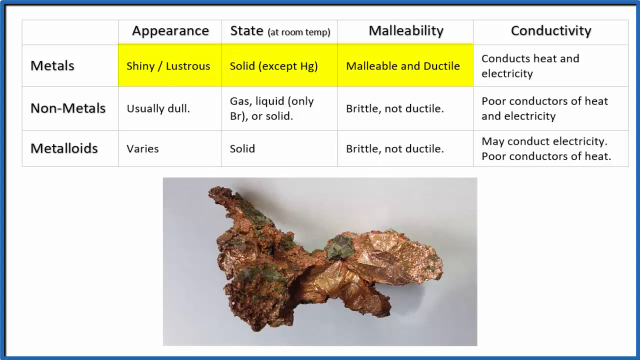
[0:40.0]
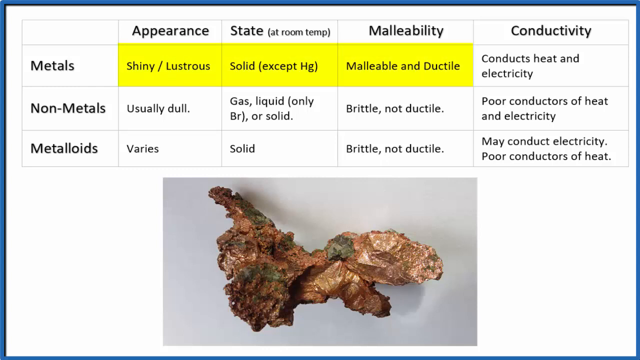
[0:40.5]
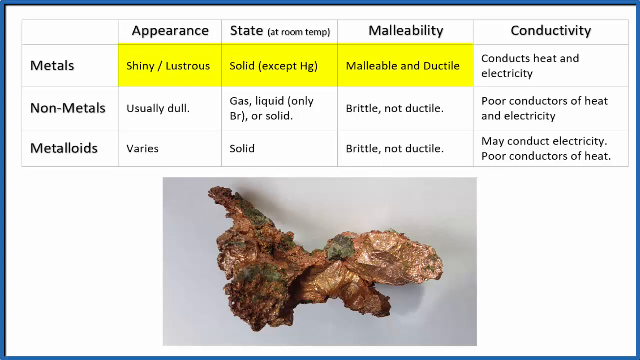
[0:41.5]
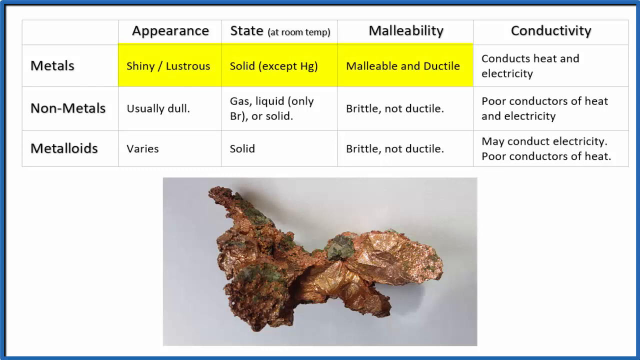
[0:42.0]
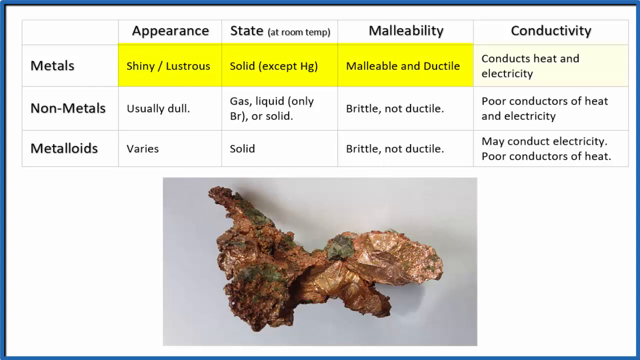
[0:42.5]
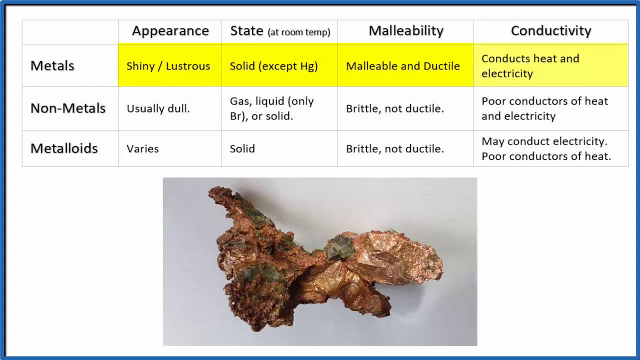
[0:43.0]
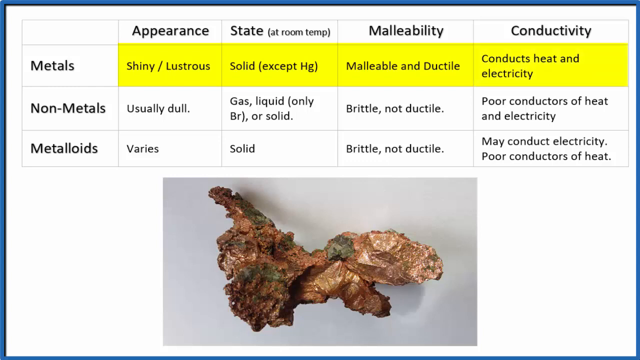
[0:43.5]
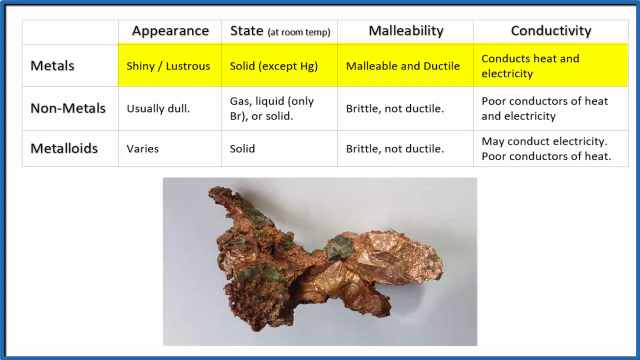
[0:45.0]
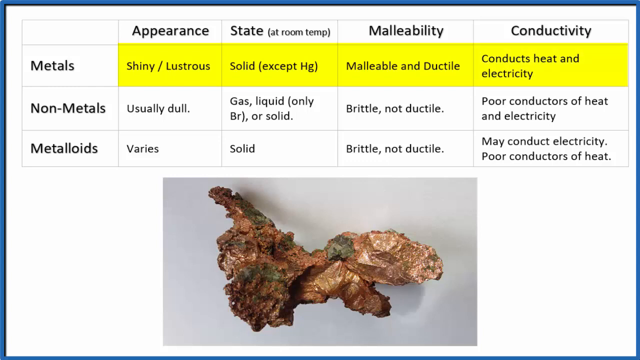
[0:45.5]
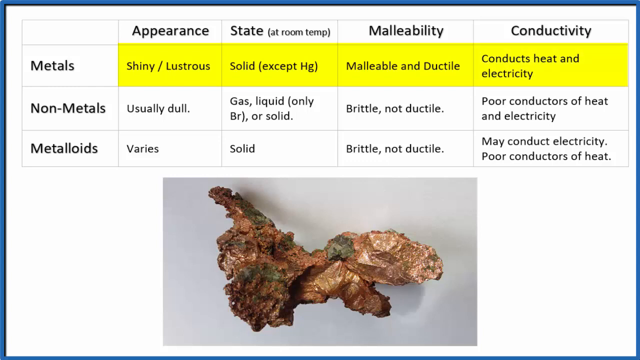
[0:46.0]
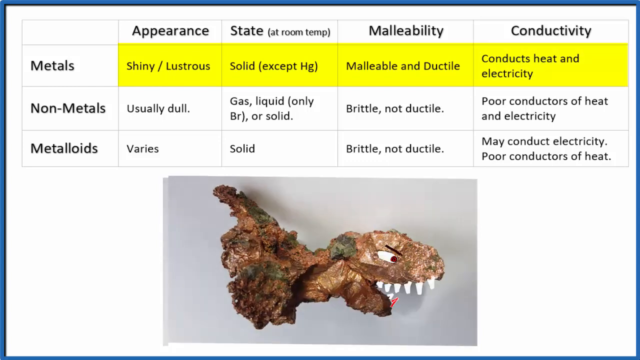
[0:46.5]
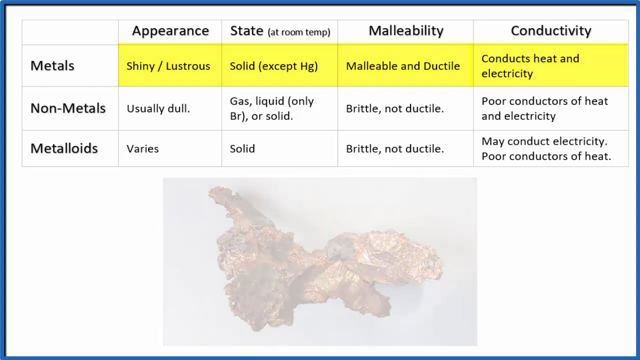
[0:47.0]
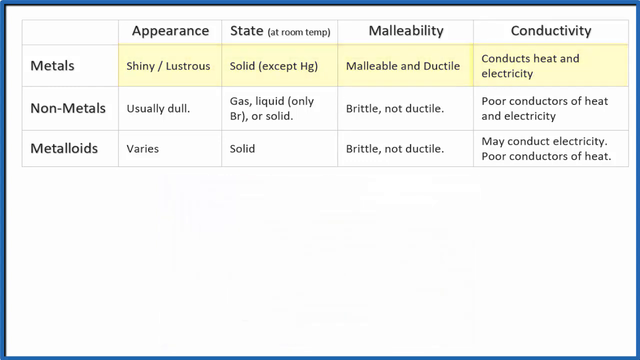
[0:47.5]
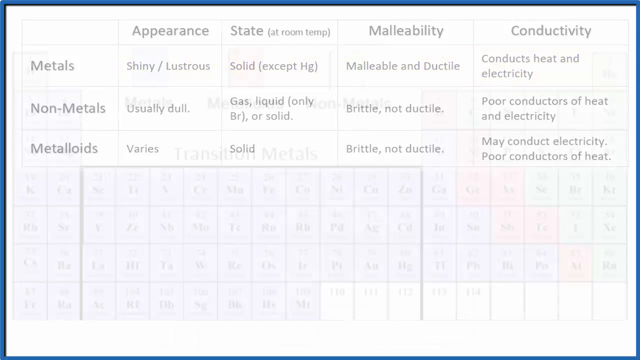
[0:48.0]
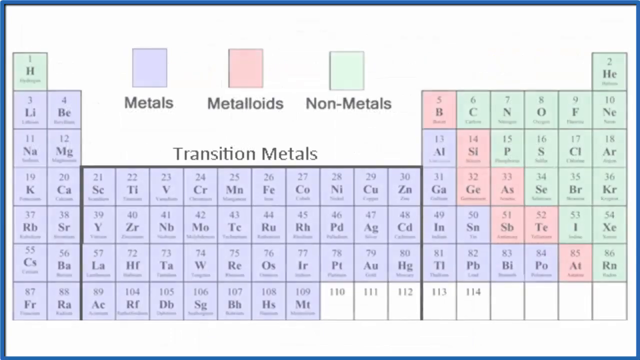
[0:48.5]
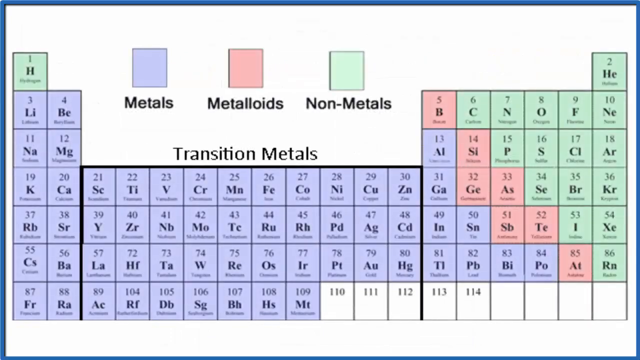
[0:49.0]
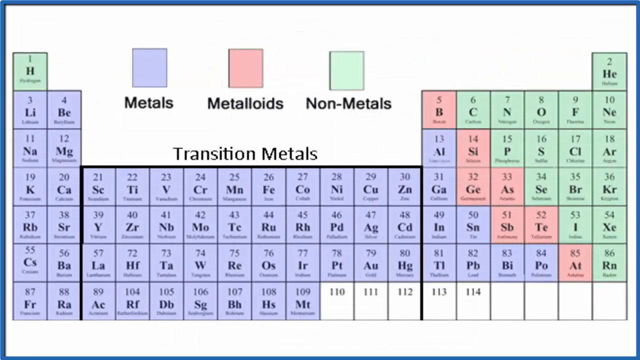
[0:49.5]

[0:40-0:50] A chart is on the page, and at the very bottom there is a picture of a piece of copper kind of shaped a little like a dinosaur, like a T-Rex. The first row of the chart is for metals, which is what copper is, the second row for non-metals and the third for metalloids. Across the top, the columns are appearance, state, malleability and conductivity, and the state column notes that it is for room temperature. The metals row is lit up in yellow: shiny and lustrous, solid, malleable and ductile, and conducts heat and electricity. Non-metals are usually dull; gas, liquid or solid; brittle but not ductile; and poor conductors of heat and electricity. For metalloids, appearance varies; they are solid; brittle, not ductile; and may conduct electricity but are poor conductors of heat.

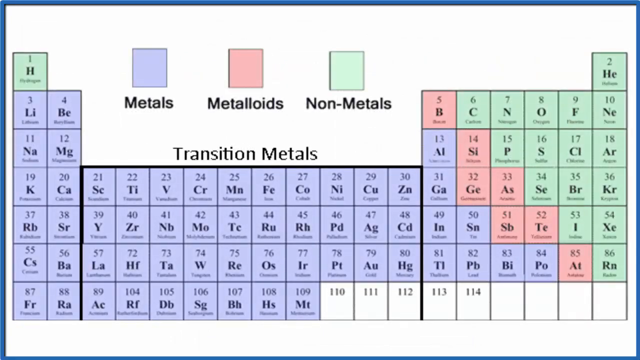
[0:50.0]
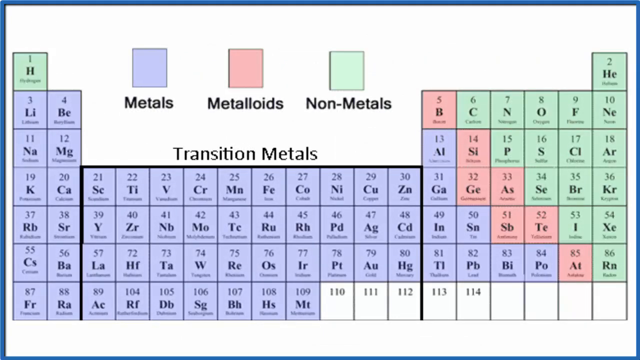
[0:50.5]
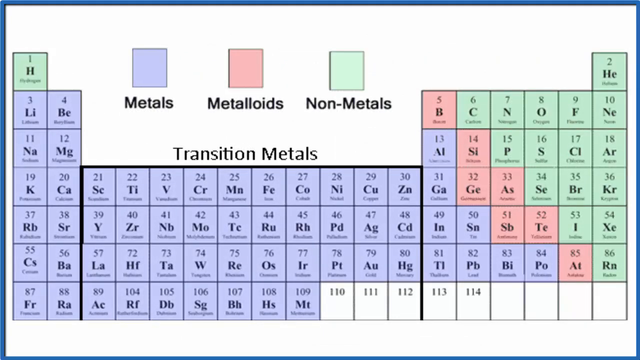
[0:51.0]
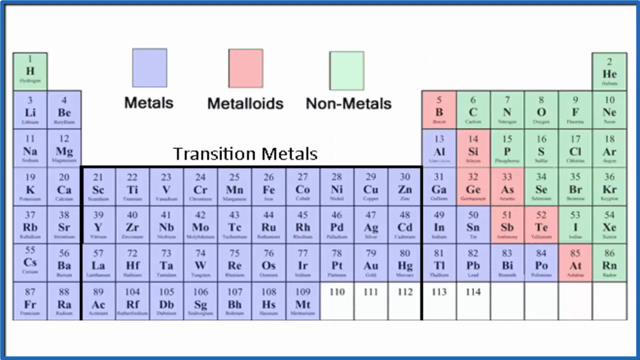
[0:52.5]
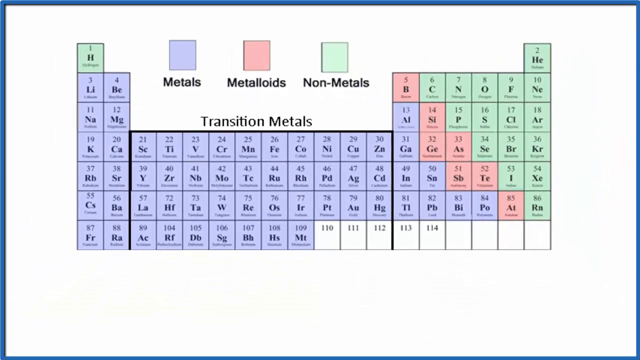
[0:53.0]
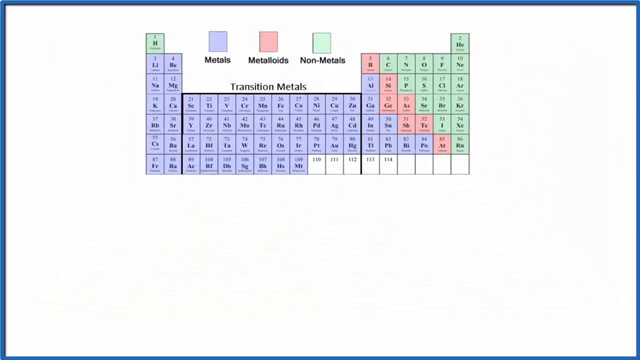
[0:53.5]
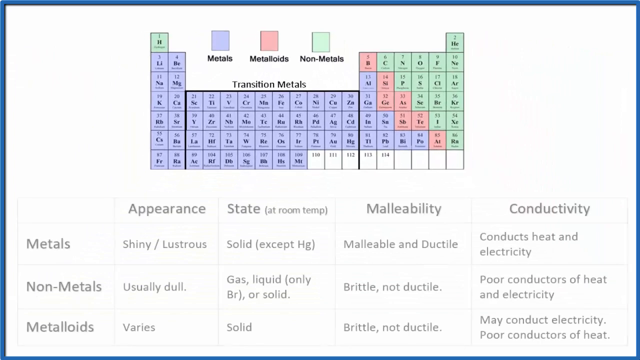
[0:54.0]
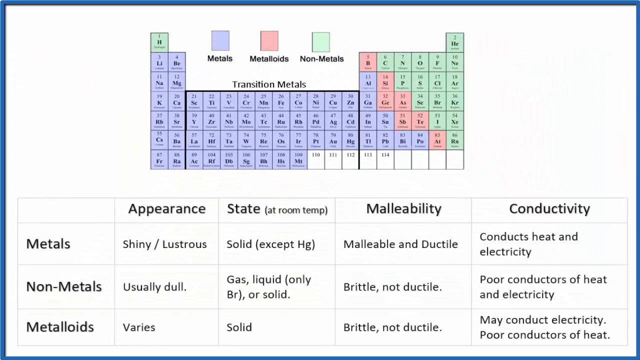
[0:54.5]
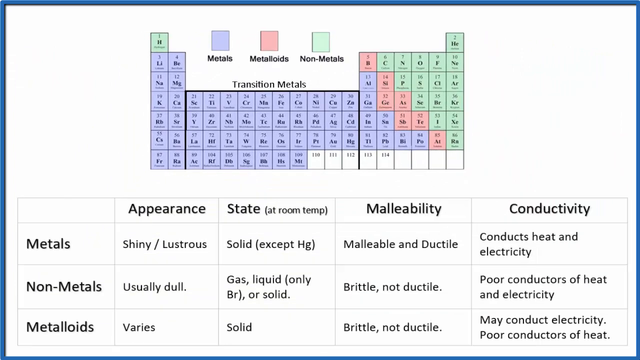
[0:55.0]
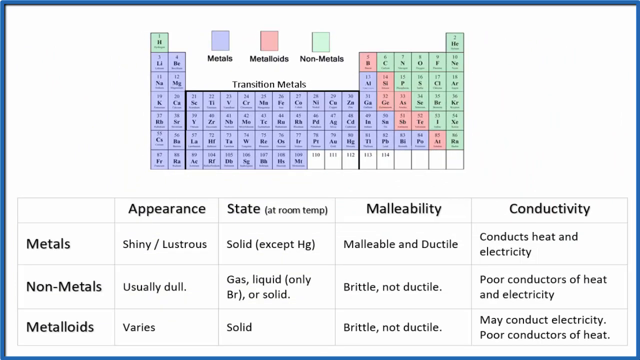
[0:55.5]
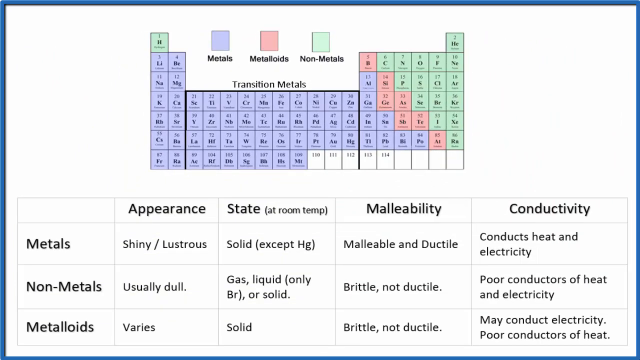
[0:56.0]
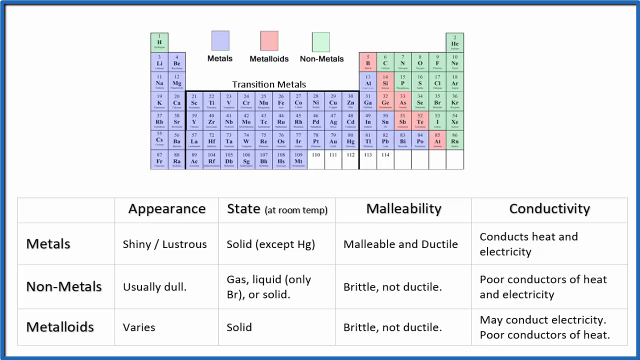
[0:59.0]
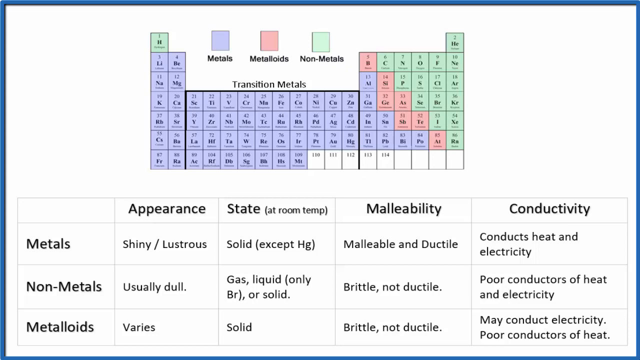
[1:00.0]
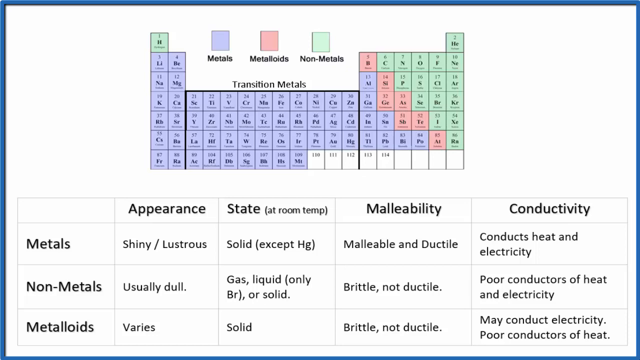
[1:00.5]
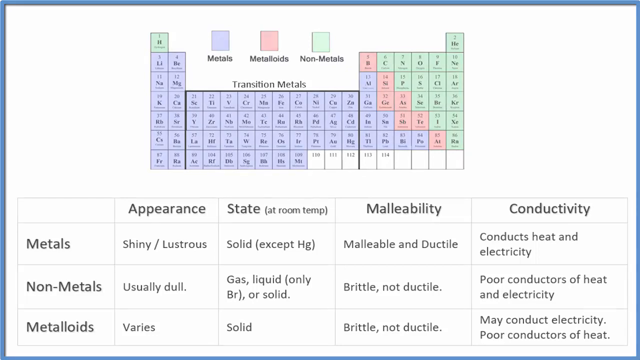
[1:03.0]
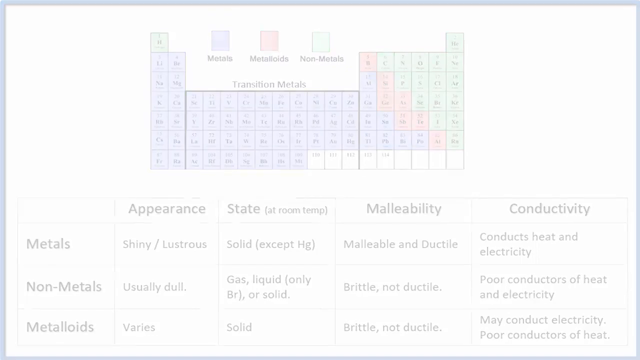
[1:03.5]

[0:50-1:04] A periodic table is on the screen, divided into sections for metals, metalloids and nonmetals, with a few gray areas at the bottom. Otherwise metals are purple, metalloids pink and nonmetals green. The same chart is at the top, comparing the characteristics of metals, nonmetals and metalloids: metals are shiny, nonmetals usually dull, and metalloids vary. For state, metals are usually solids, nonmetals can be gas, liquid or solid, and metalloids are solid. The chart continues with malleability and conductivity.